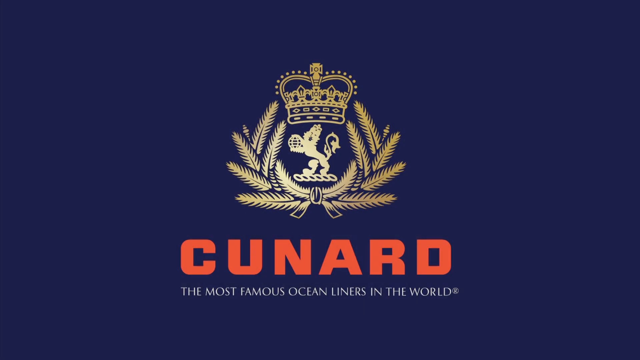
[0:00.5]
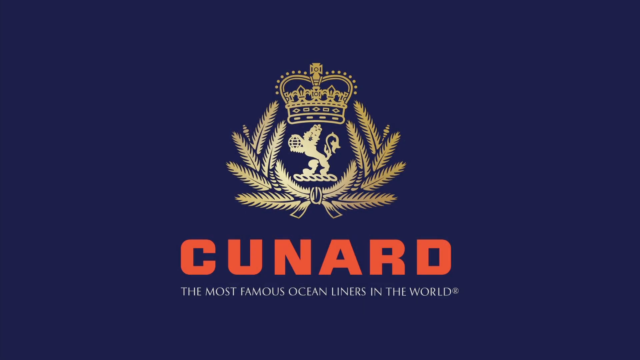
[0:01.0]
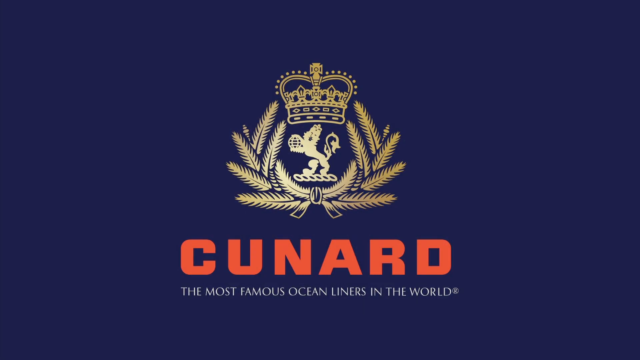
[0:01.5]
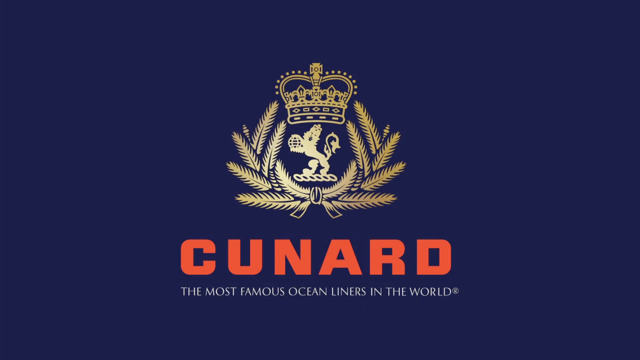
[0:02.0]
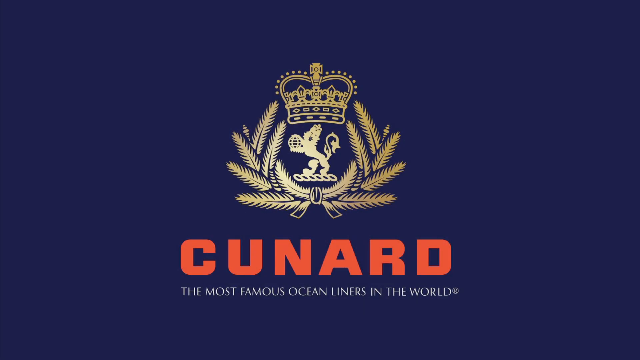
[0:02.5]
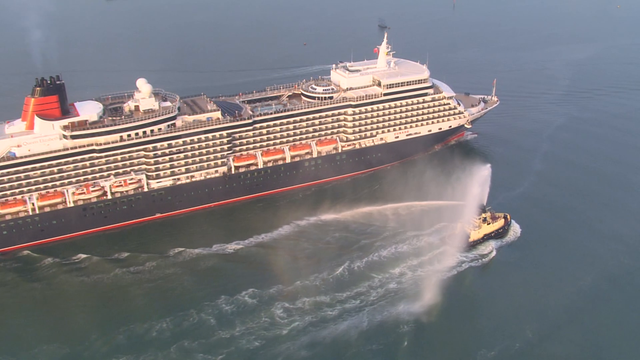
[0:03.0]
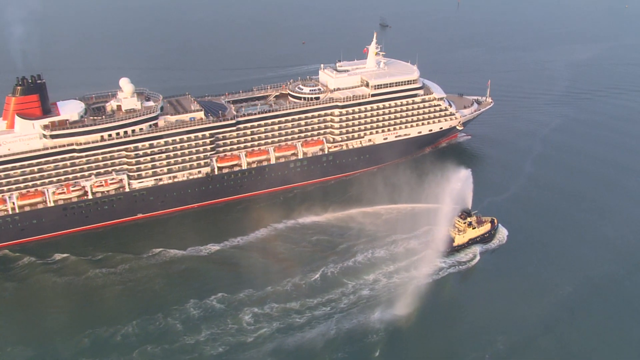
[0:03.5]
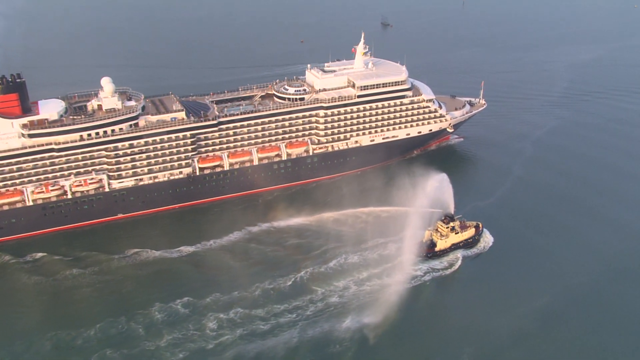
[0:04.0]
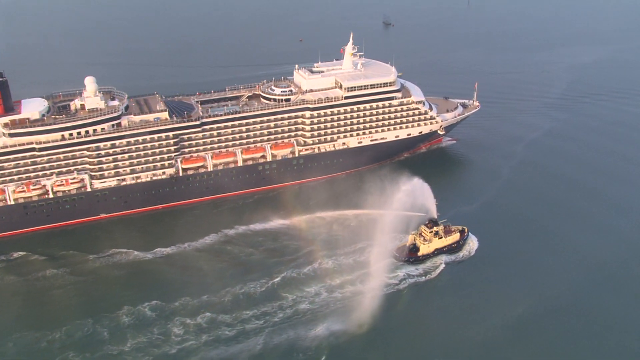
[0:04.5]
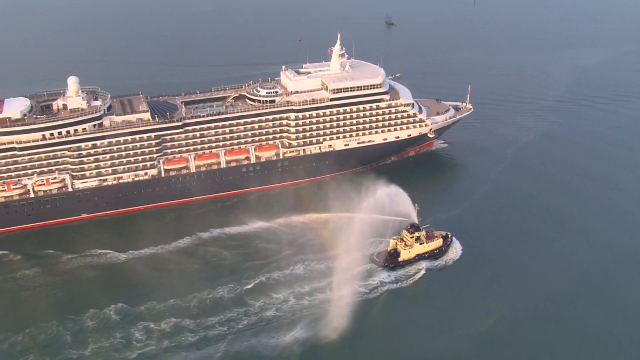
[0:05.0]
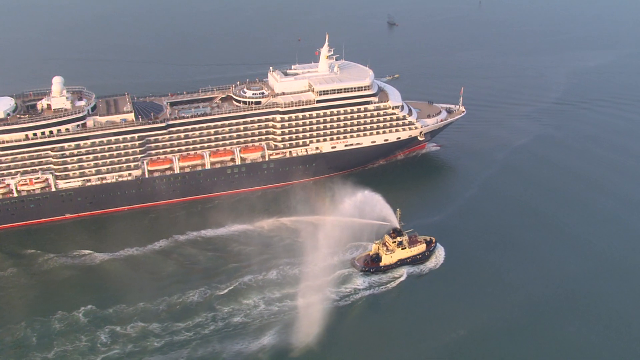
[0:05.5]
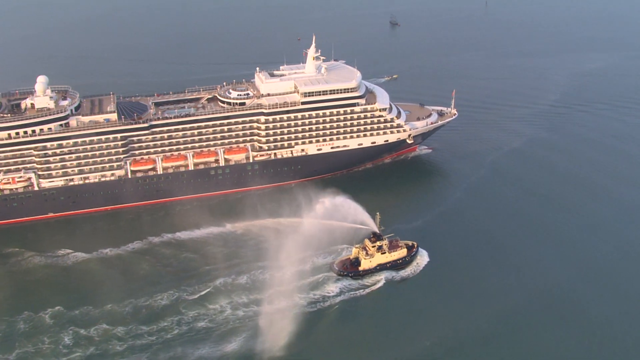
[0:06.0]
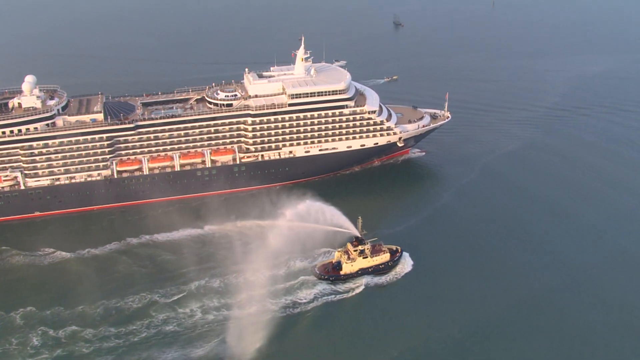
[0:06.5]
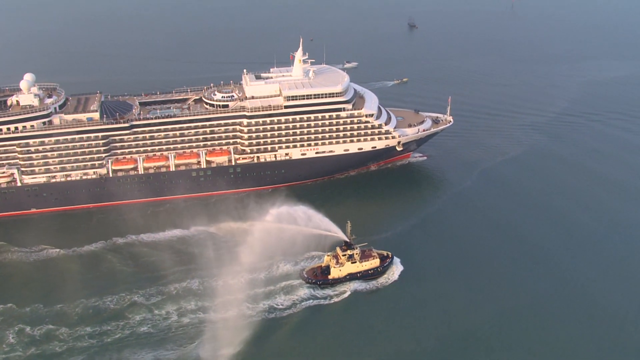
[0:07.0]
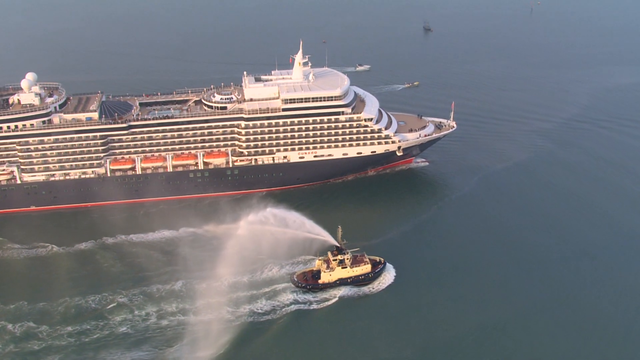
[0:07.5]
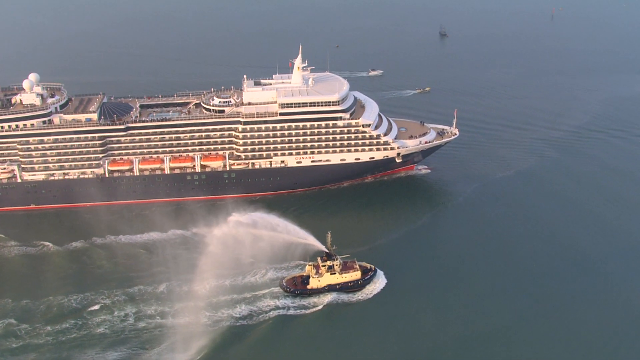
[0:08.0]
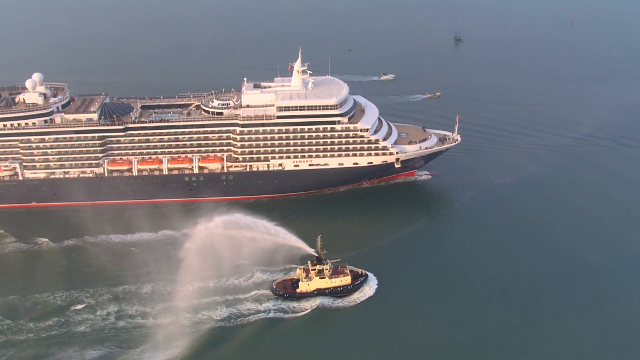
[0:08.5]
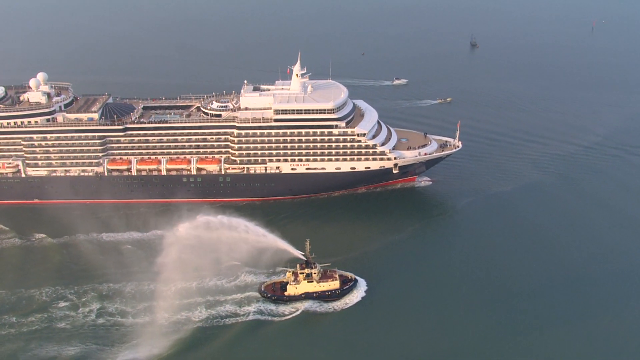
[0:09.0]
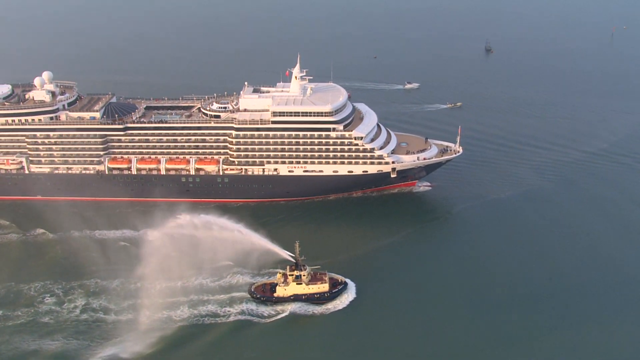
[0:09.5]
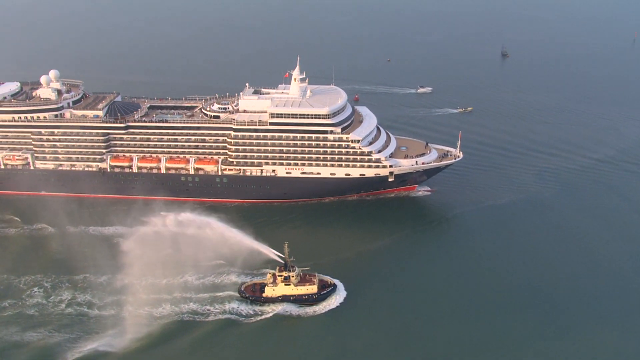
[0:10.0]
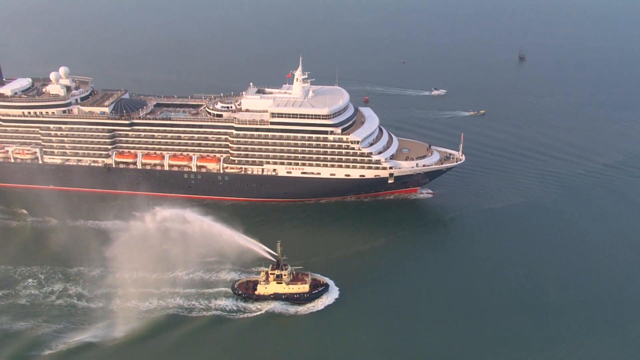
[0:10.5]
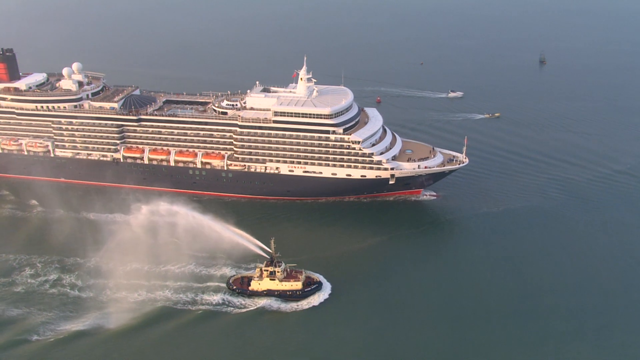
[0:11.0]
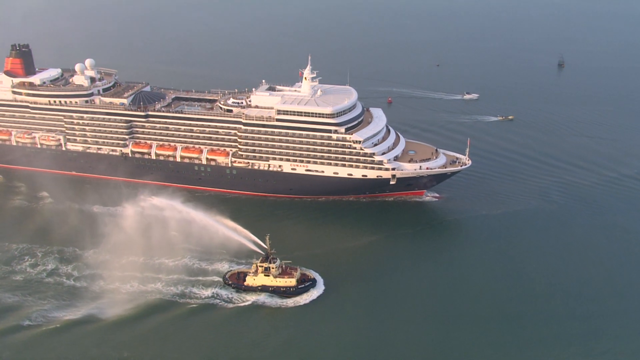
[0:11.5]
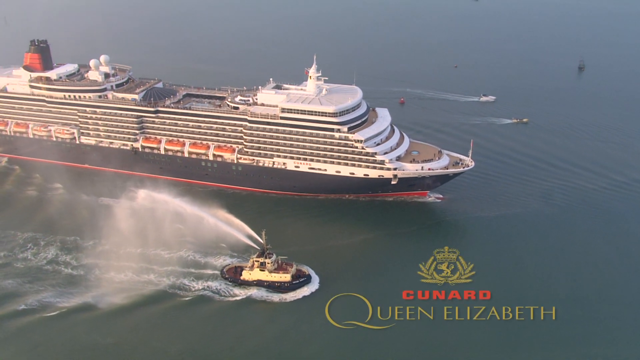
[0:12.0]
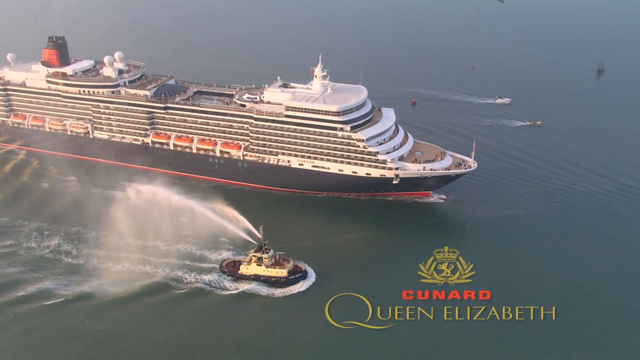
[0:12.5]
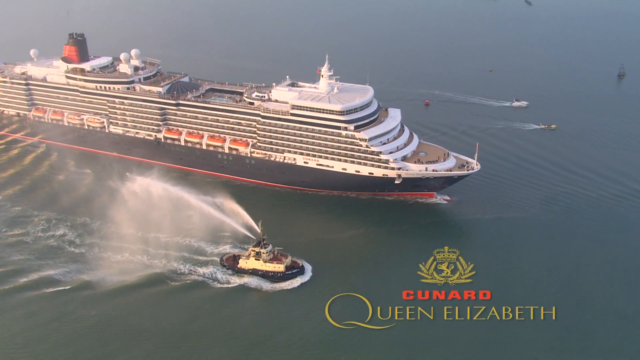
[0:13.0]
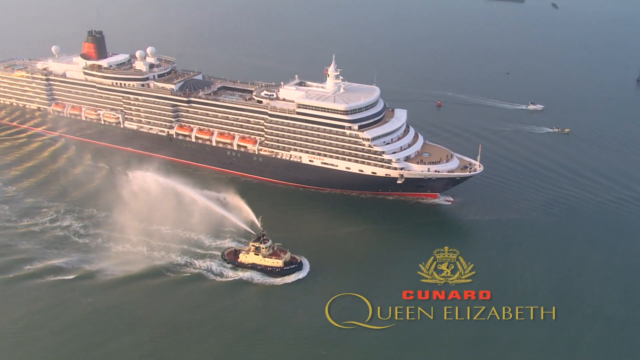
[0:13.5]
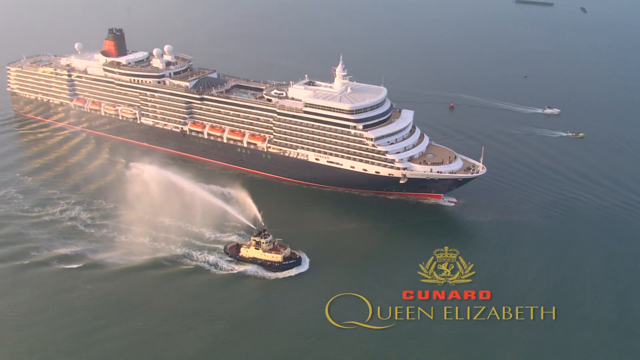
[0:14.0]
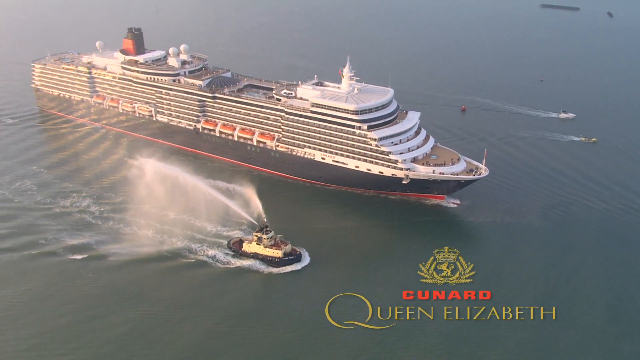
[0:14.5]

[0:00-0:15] The video opens on a navy blue background with a symbol topped by a crown above the word "CUNARD", written in large red capital letters; below it, in small white letters, it reads "The most famous ocean liners in the world." The video then changes to footage of a large cruise ship with many decks and pools on top, at sail. The ship is red on the very bottom, then navy blue, and mostly white on the decks above, with a red and navy blue smokestack and some visible lifeboats on its side. A yellow tugboat with a black bottom moves along on the right-hand side of the ship, spraying water. On the left-hand side, two small boats move through the water off the bow.